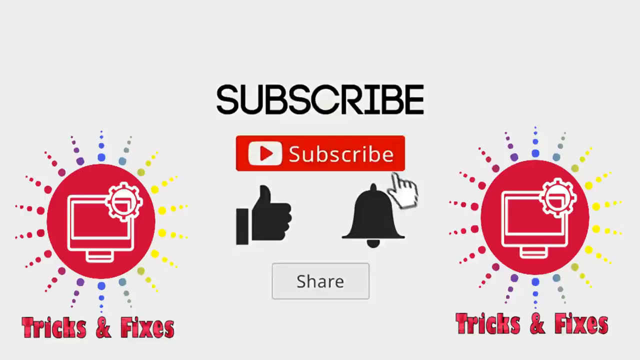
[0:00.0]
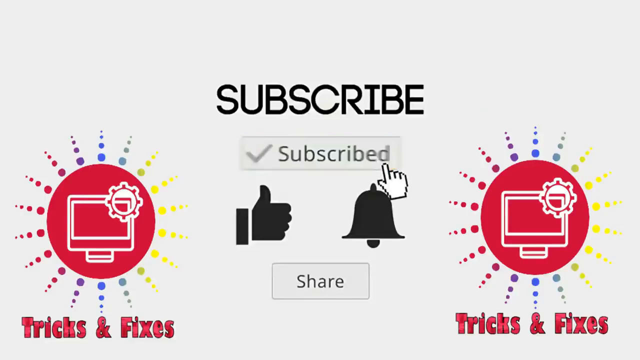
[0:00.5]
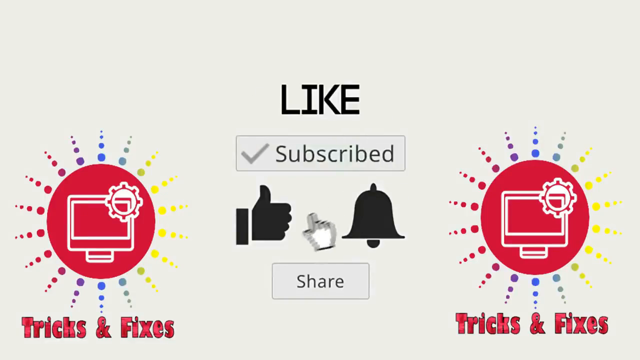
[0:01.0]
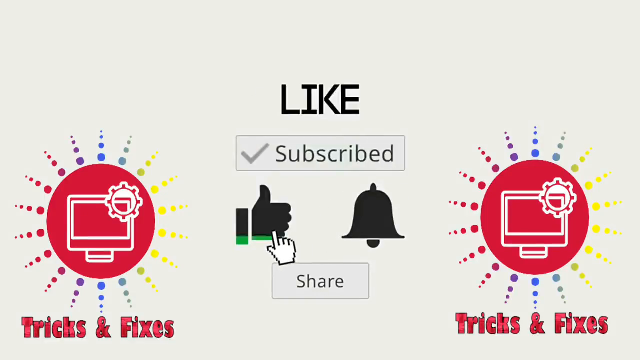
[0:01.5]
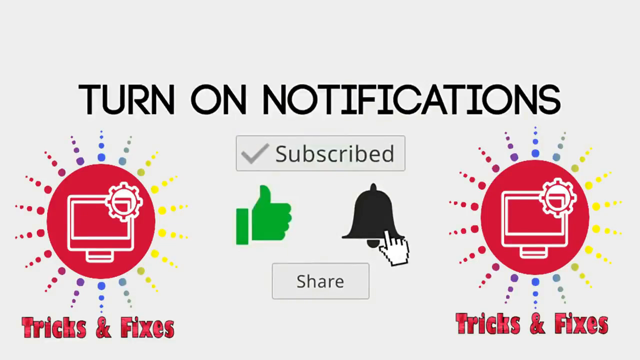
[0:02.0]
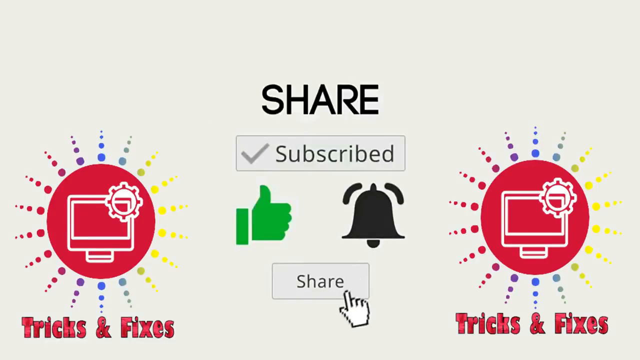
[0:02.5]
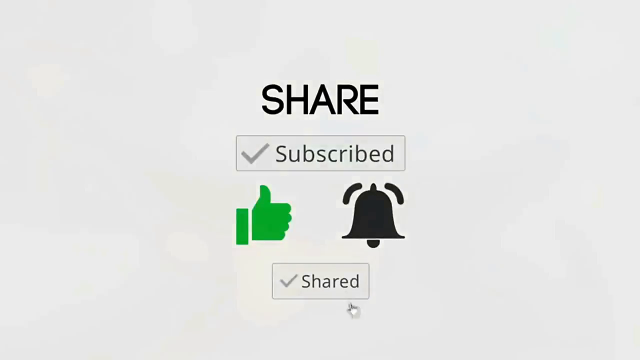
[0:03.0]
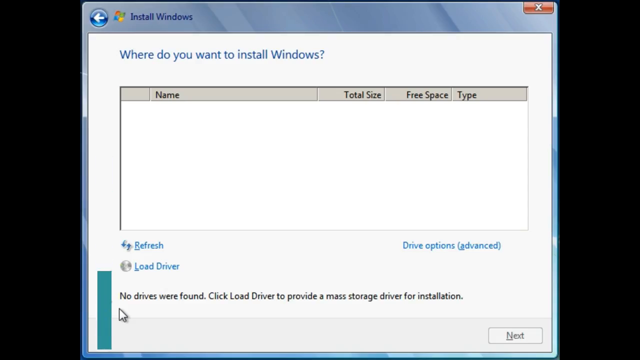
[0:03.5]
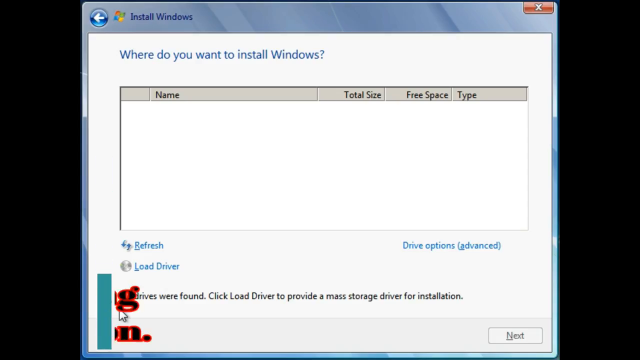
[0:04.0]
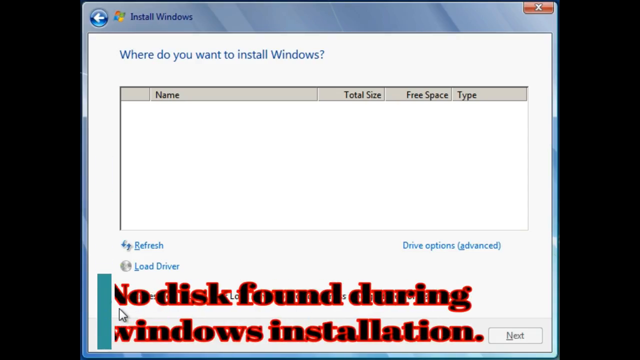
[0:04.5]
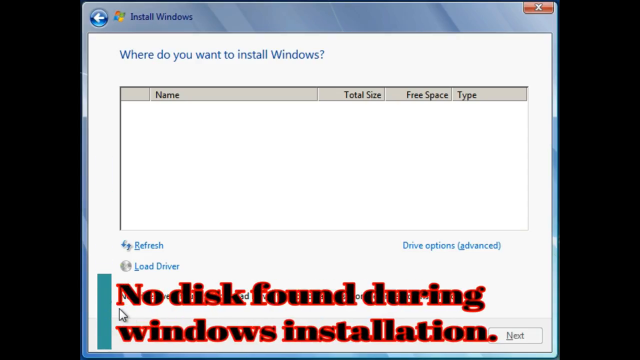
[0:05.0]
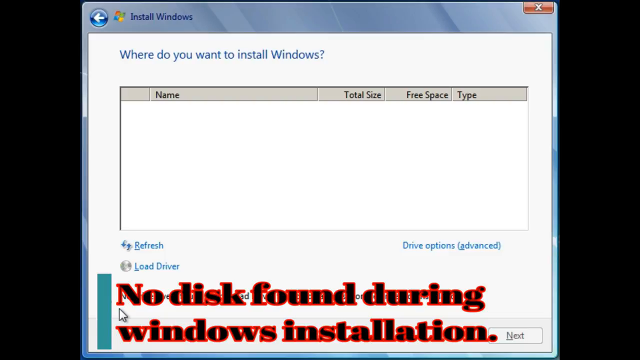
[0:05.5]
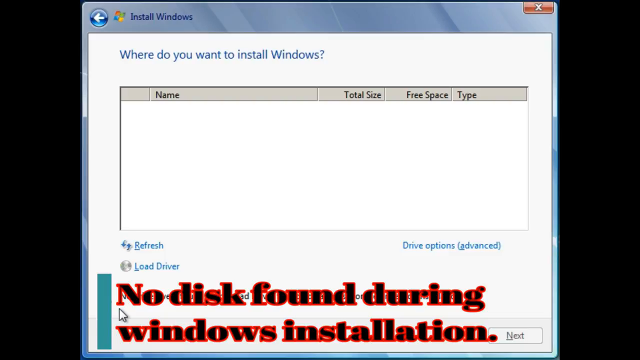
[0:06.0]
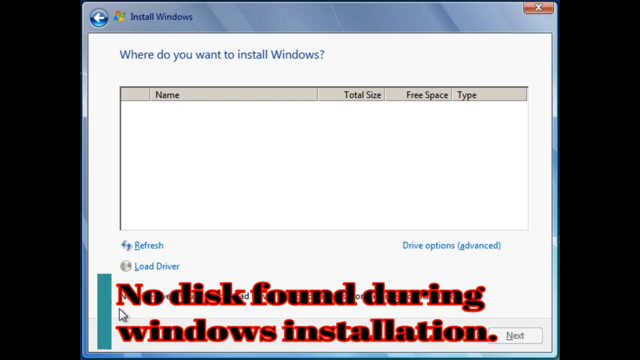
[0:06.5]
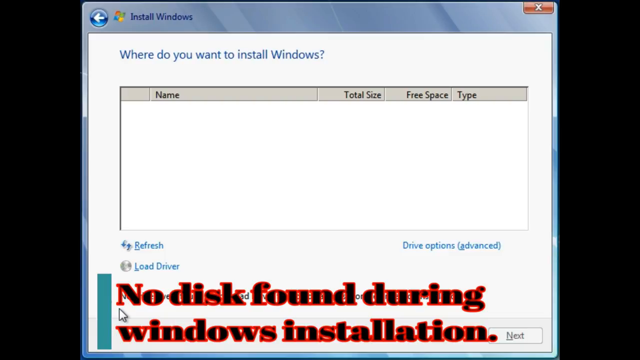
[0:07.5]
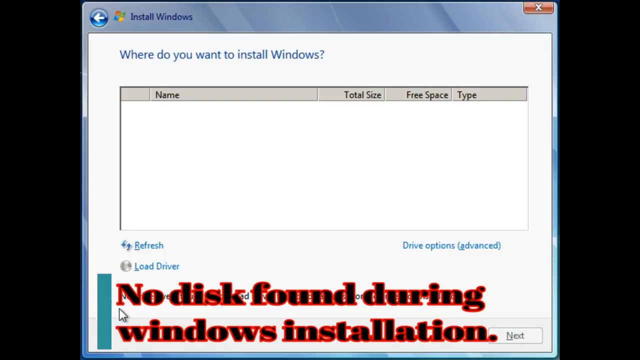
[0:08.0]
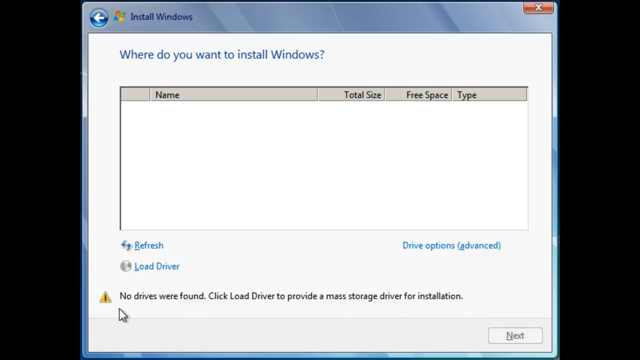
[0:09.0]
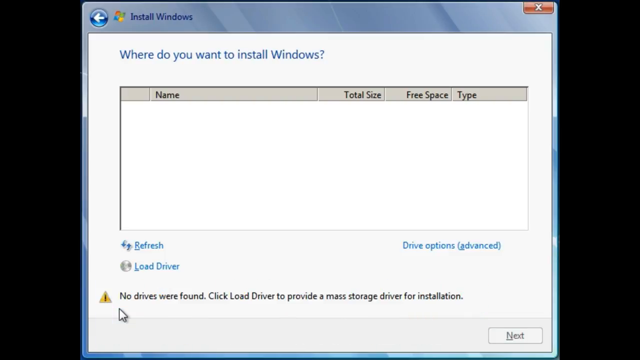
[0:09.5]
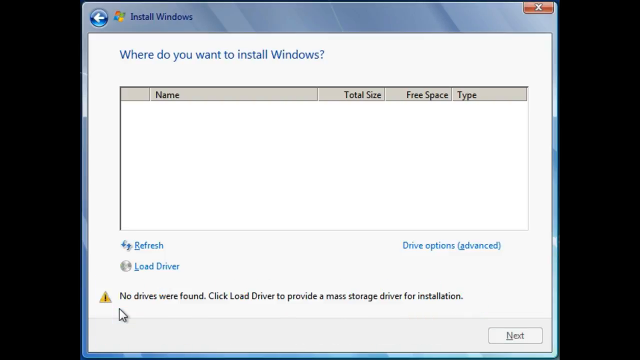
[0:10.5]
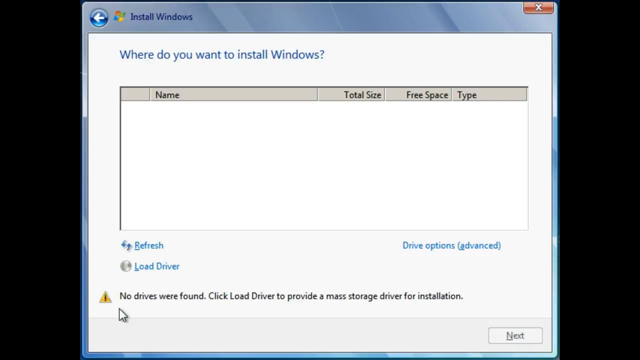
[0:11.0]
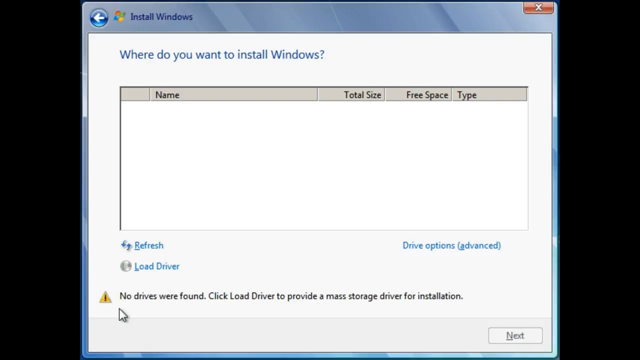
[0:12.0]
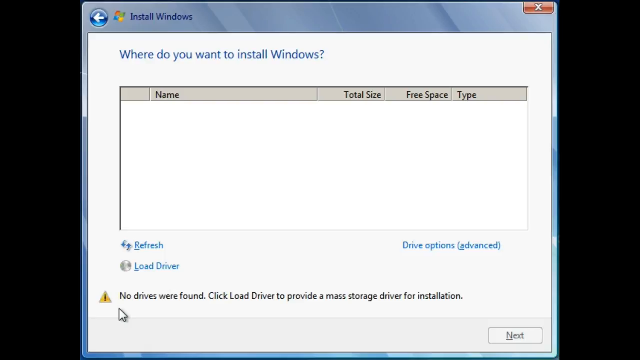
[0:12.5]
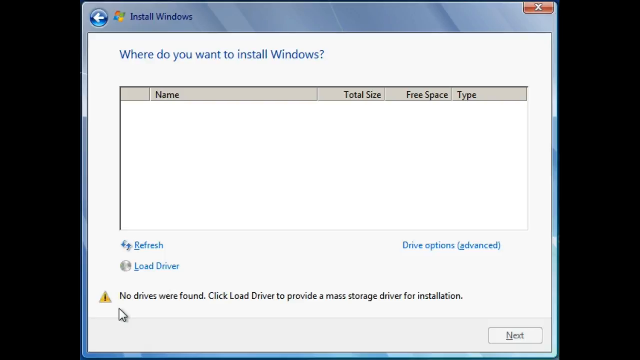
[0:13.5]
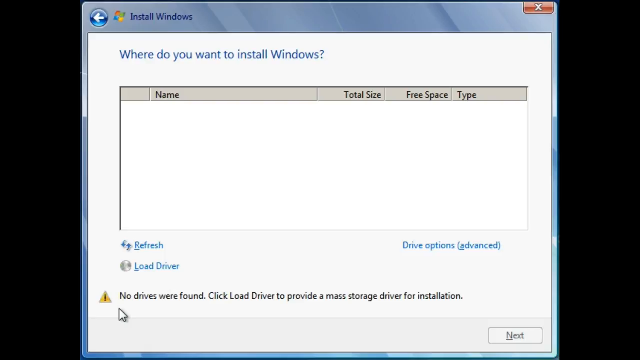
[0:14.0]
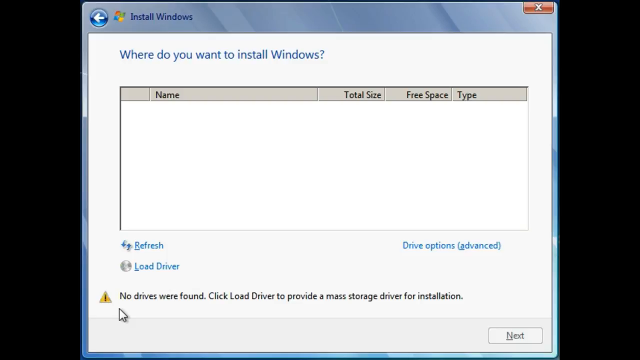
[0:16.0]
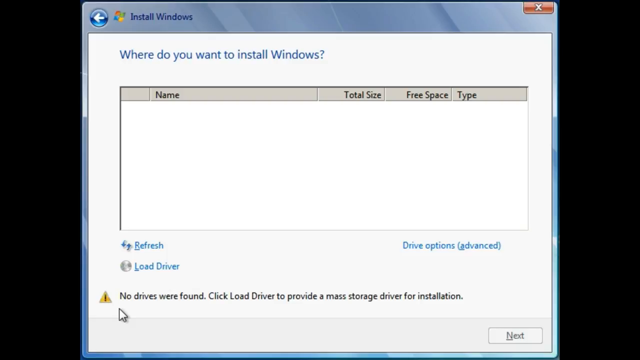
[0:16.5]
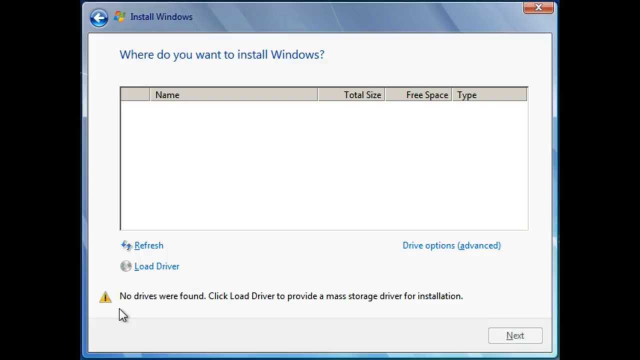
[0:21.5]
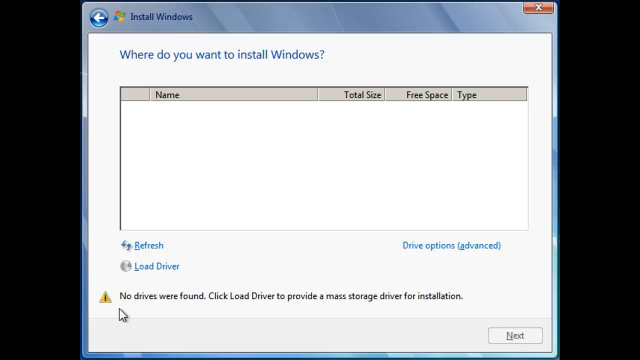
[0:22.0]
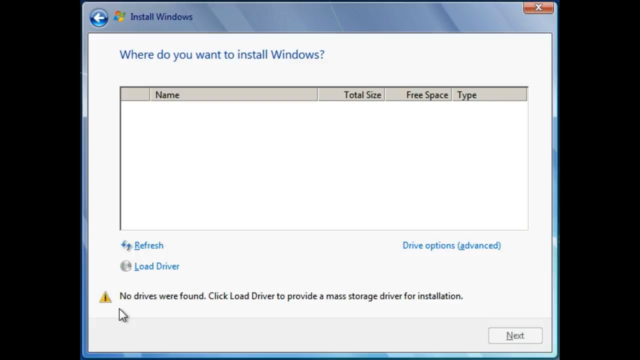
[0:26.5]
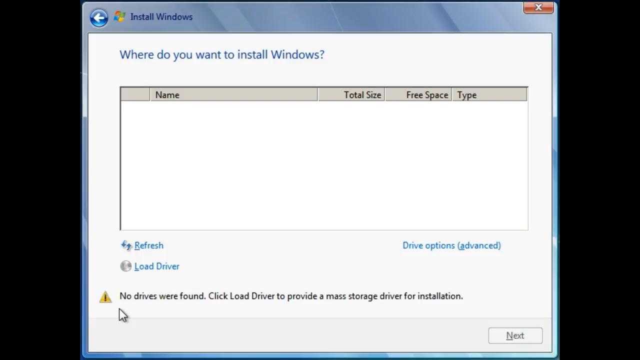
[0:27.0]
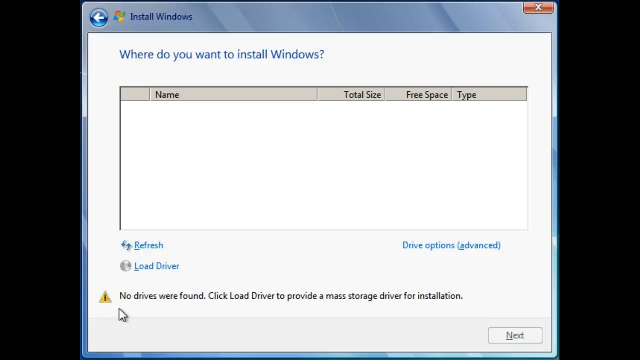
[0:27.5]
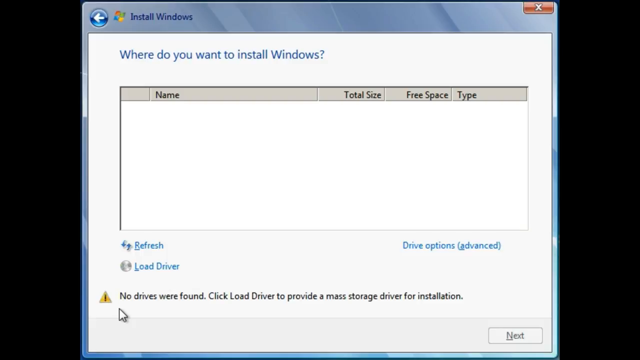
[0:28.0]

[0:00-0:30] The video opens with an intro screen on a white background. In the top centre is the word "subscribe", and below it is a red subscribe button with the YouTube Play logo. Below this is a thumbs-up icon with a bell icon to its right, and below those a share button. A hand-icon cursor first clicks the red subscribe button, which greys out and changes to "subscribed" with a tick mark. The cursor then moves down to the thumbs-up and clicks it, turning it green. It moves across to the right and clicks the bell, which changes design, gaining two lines above it so it looks like it is ringing. The cursor then moves down and clicks the share button, which changes to "shared" as a tick mark appears. The video then changes to a screenshot of a Windows installation window. Below it, text appears from the left side reading "no disk found during Windows installation", then disappears from view. The screenshot is held on screen with no motion for about 15 seconds.